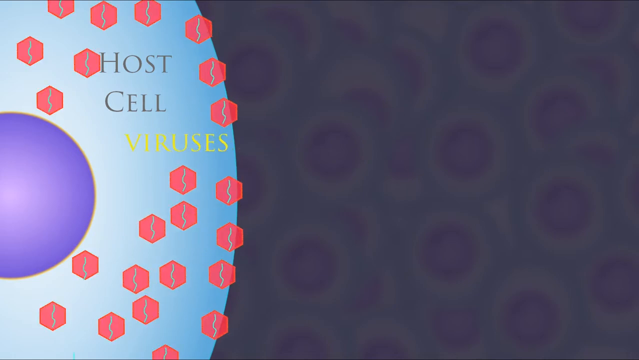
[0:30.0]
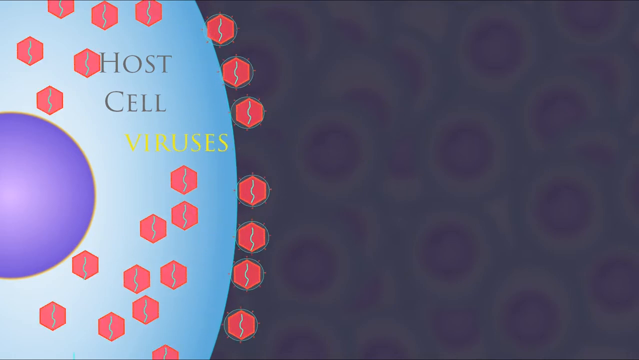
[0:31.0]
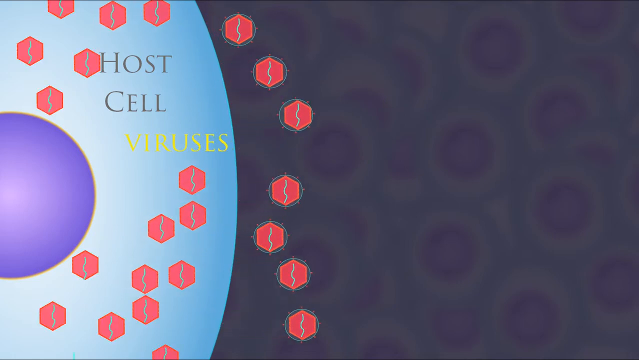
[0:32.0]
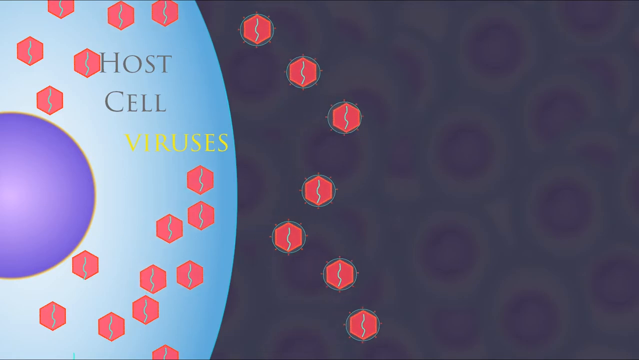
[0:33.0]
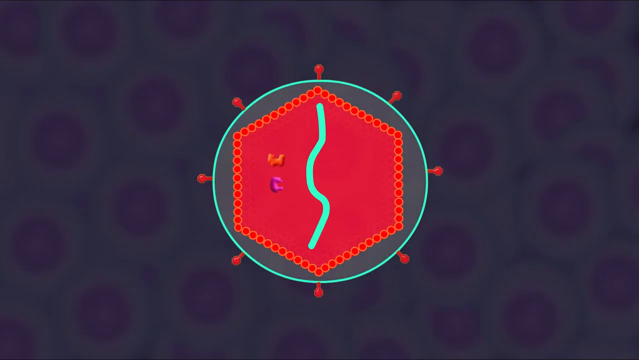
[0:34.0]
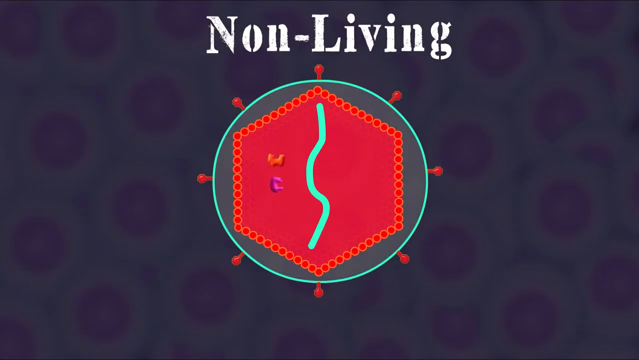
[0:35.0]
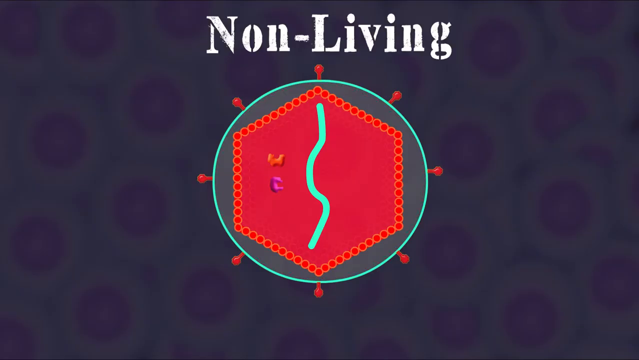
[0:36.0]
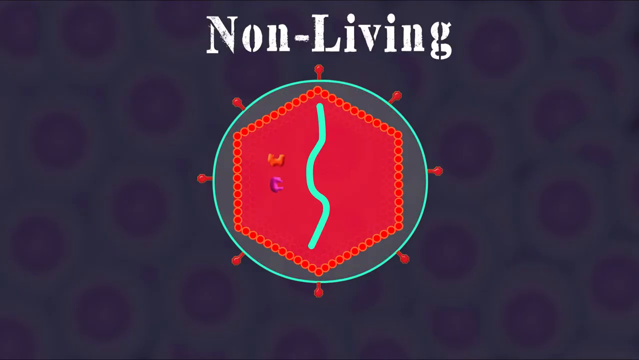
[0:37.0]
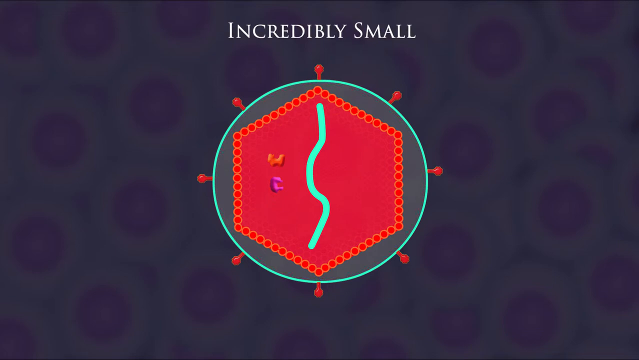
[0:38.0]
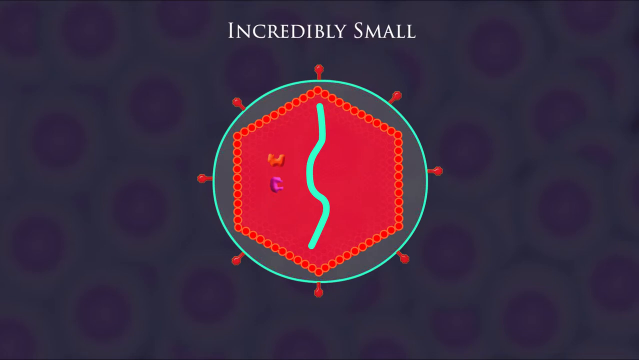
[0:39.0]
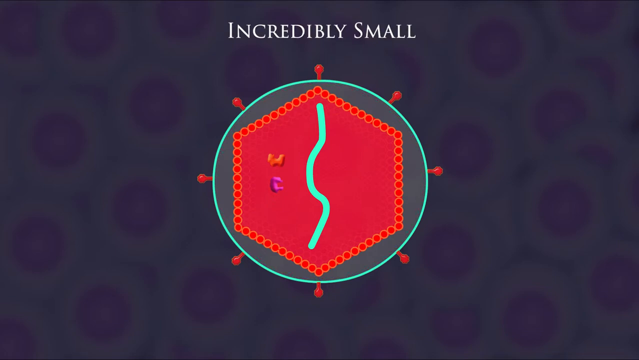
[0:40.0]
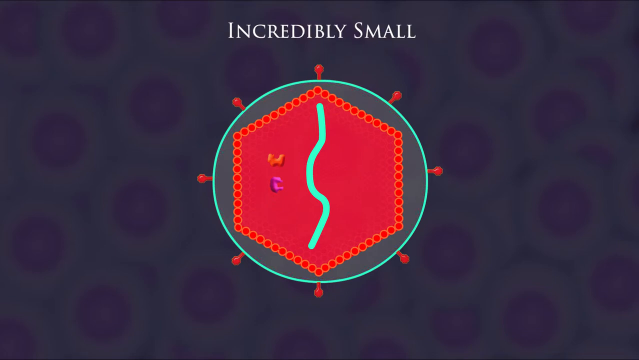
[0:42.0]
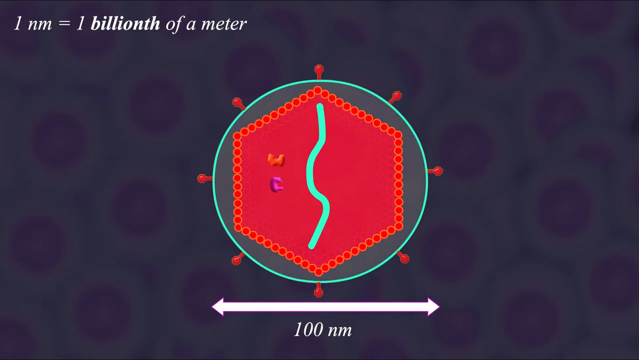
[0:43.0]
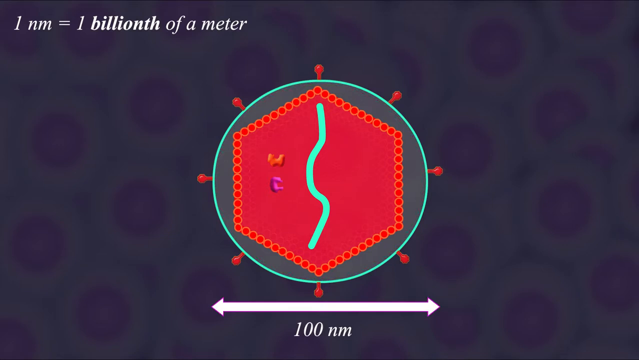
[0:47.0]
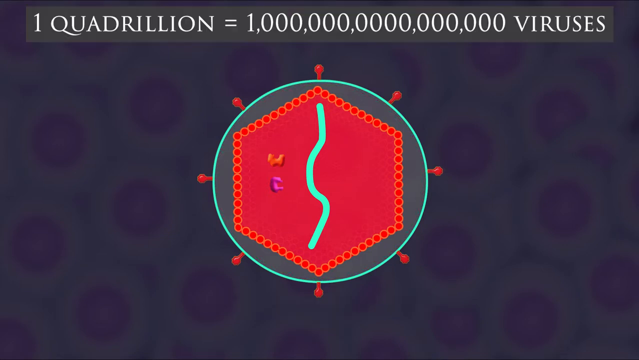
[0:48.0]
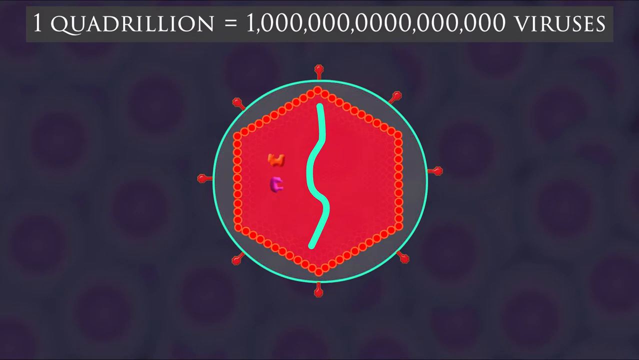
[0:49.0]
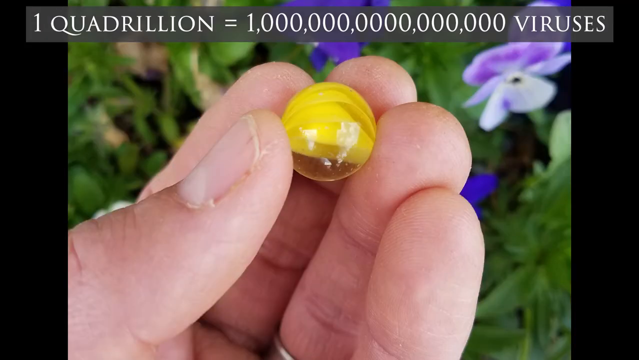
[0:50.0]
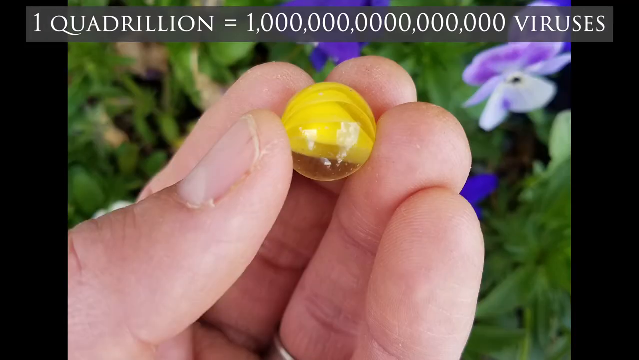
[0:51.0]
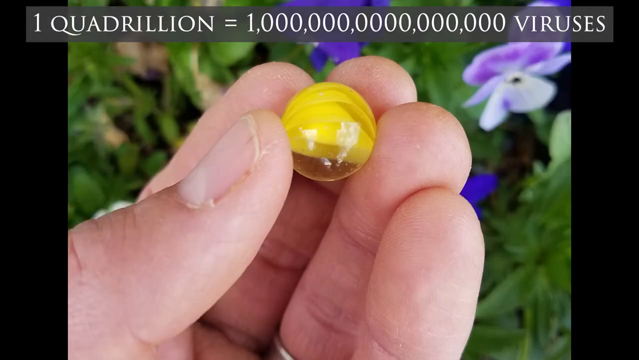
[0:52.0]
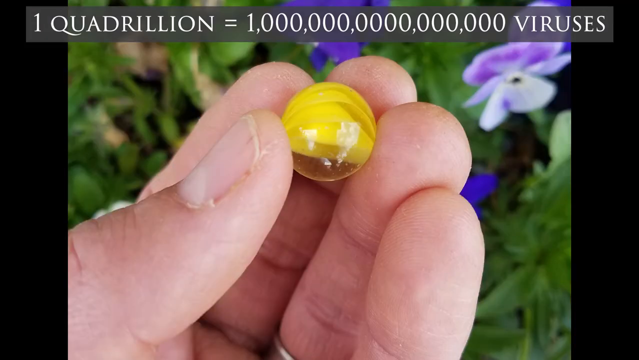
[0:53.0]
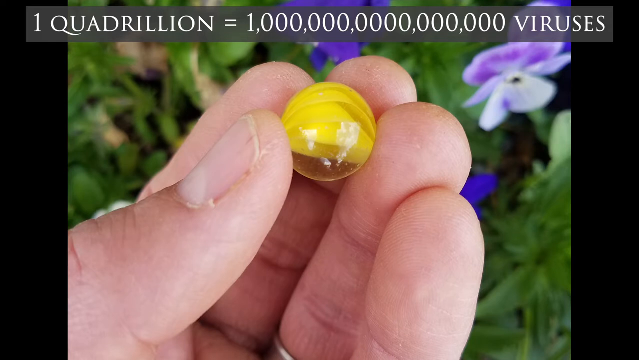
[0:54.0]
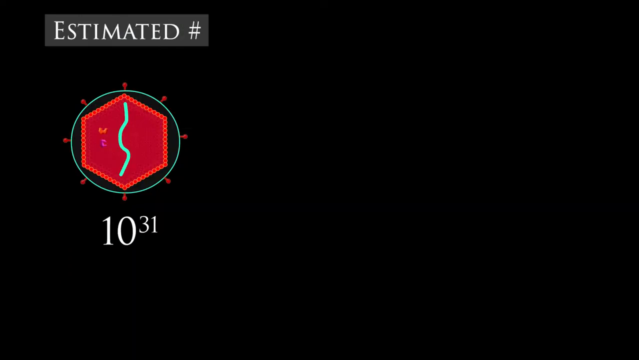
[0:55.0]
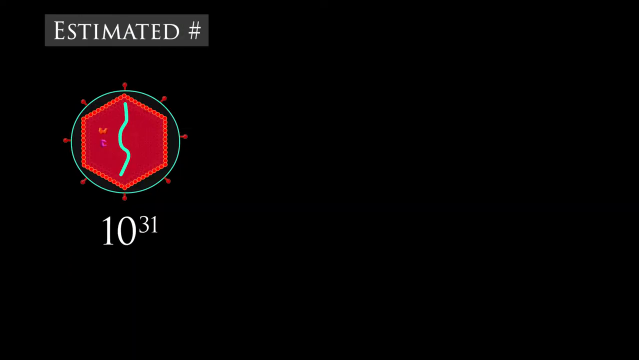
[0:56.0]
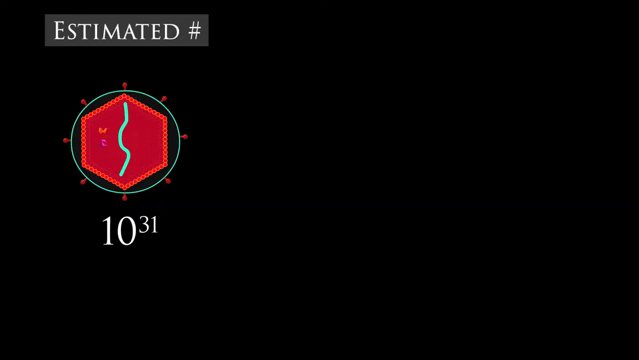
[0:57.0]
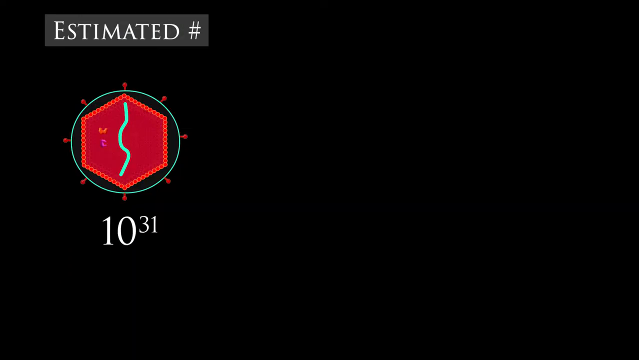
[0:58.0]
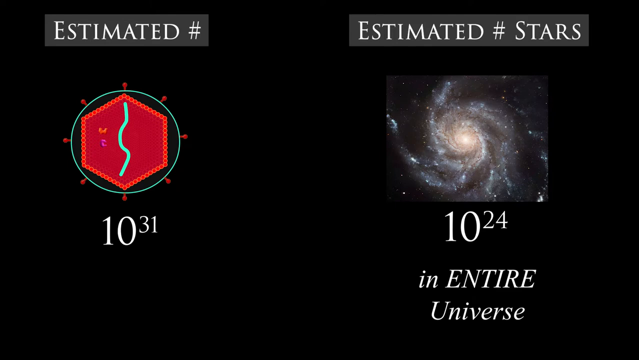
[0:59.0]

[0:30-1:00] A bunch of viruses appear as little red circular things, and the host cell is a blue circular thing on the left side of the screen, blue on the outside and purple in the middle. Red viruses are attached to the host cell, and then some of them break away from it, apparently representing viruses that are no longer living. The next screen shows the virus as non-living. The viruses are shown to be incredibly small, with 1 nm equal to one billionth of a meter. An image then shows a person holding a yellow marble in the tips of their fingers, with a flower garden of blue and purple flowers and green plants behind them. The final screen says "estimated 1031."